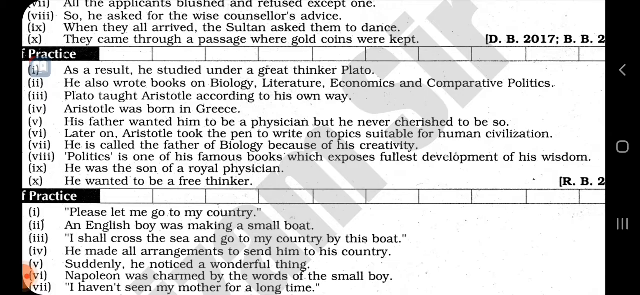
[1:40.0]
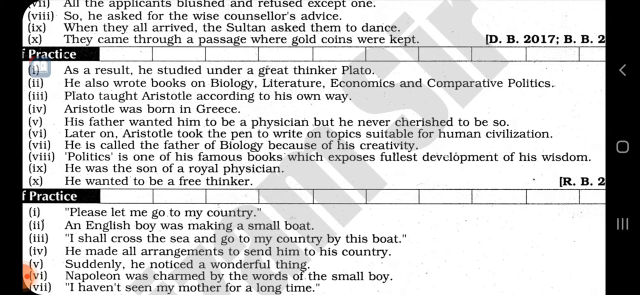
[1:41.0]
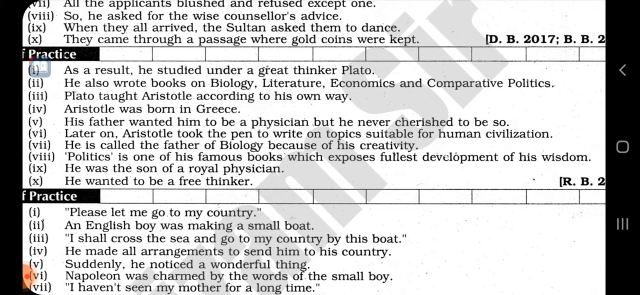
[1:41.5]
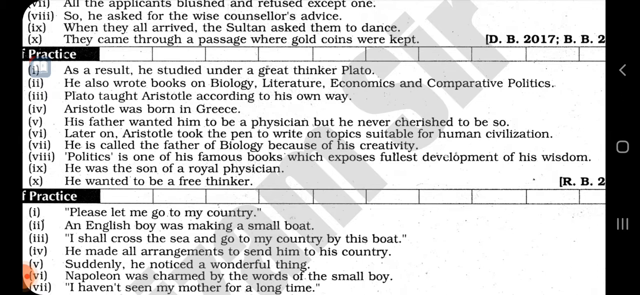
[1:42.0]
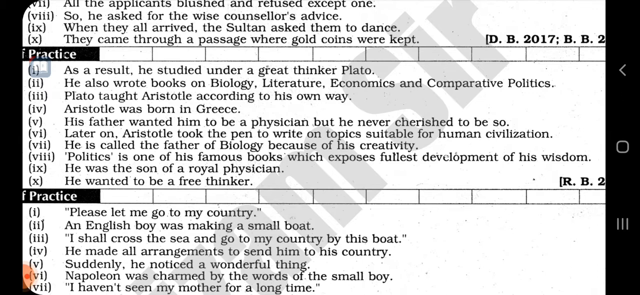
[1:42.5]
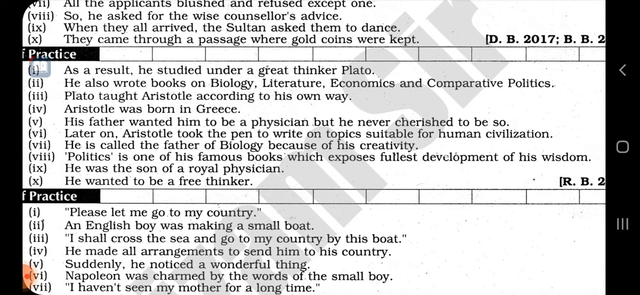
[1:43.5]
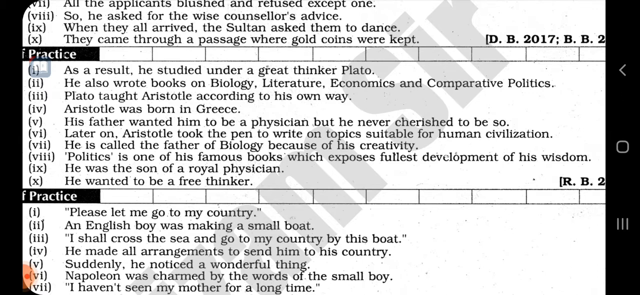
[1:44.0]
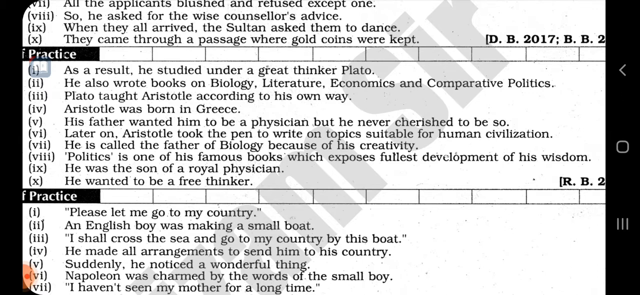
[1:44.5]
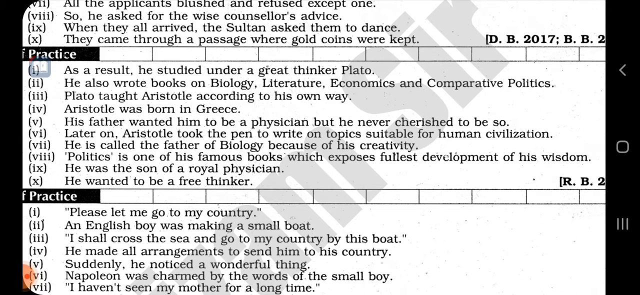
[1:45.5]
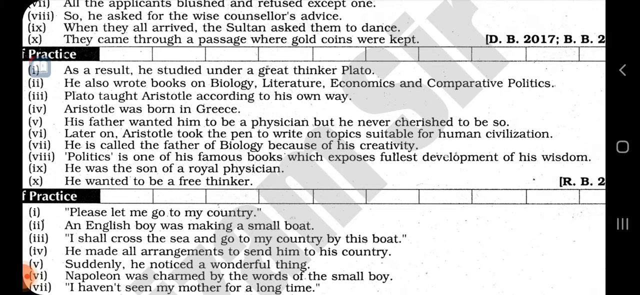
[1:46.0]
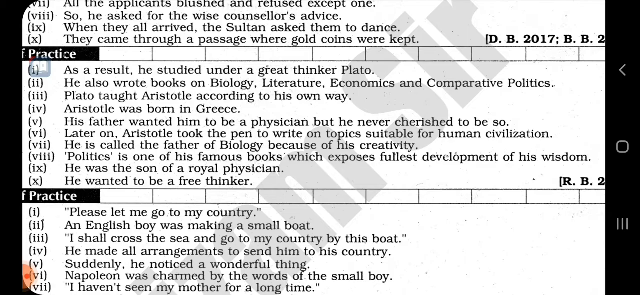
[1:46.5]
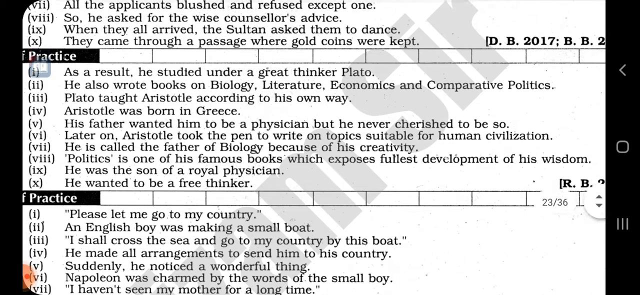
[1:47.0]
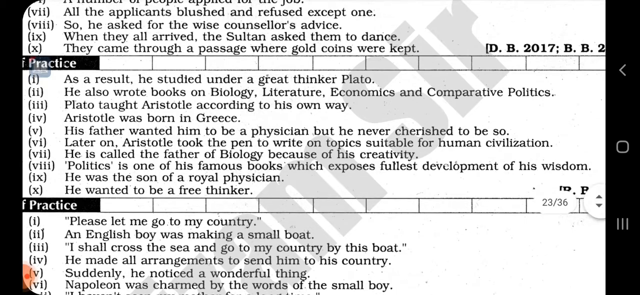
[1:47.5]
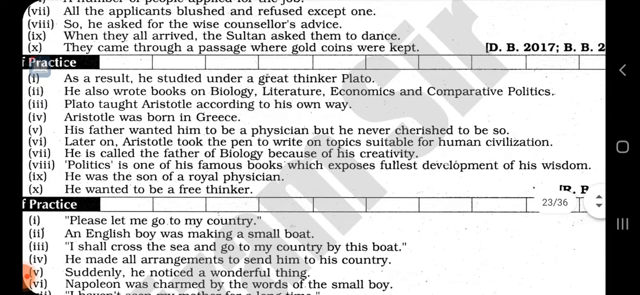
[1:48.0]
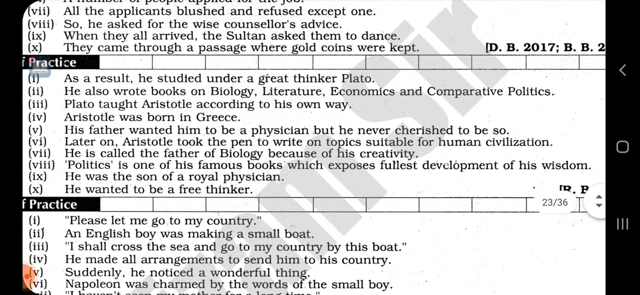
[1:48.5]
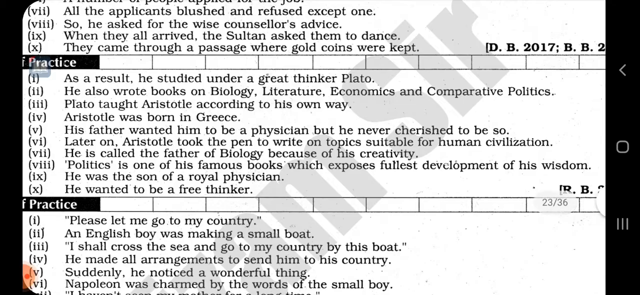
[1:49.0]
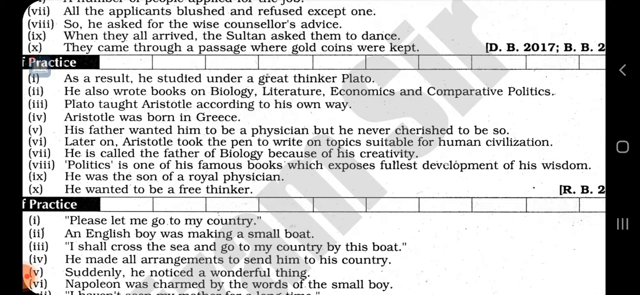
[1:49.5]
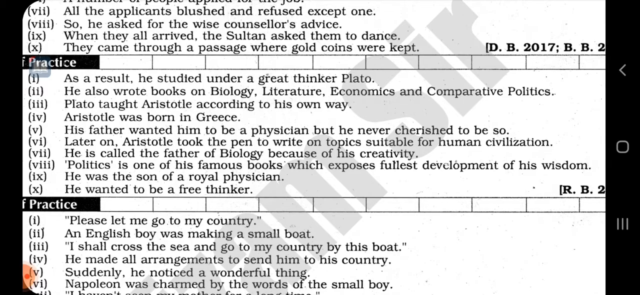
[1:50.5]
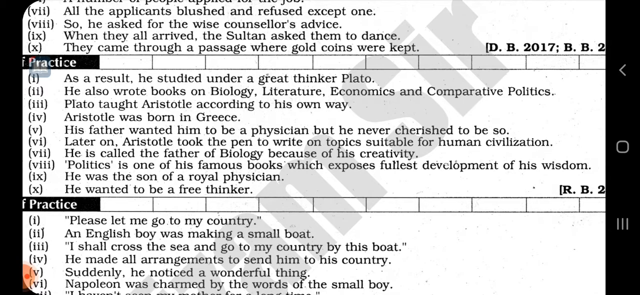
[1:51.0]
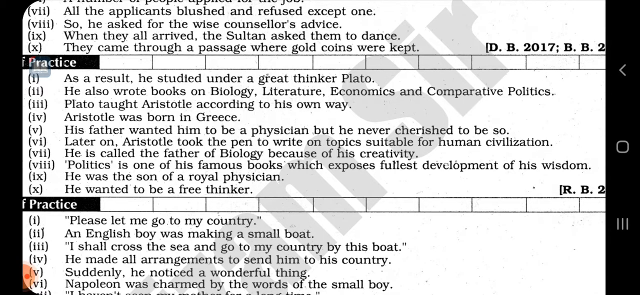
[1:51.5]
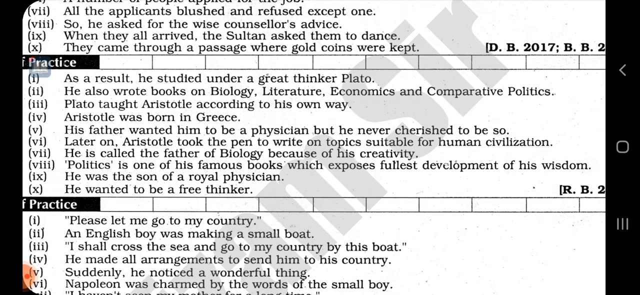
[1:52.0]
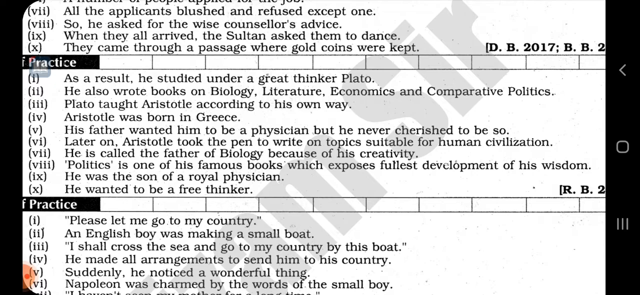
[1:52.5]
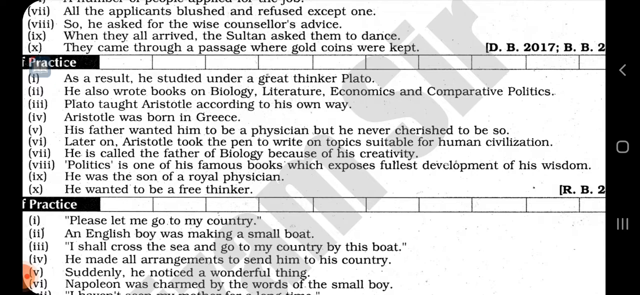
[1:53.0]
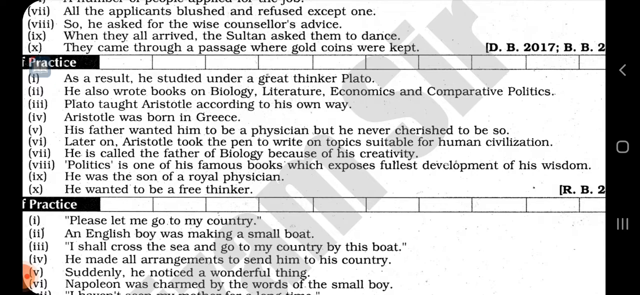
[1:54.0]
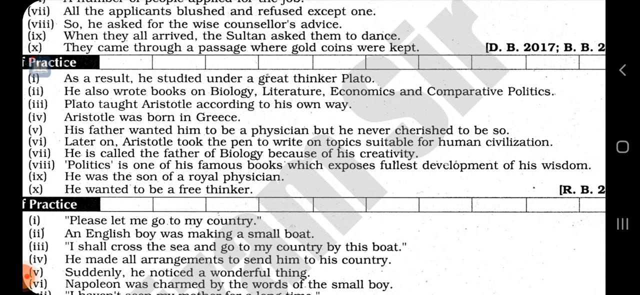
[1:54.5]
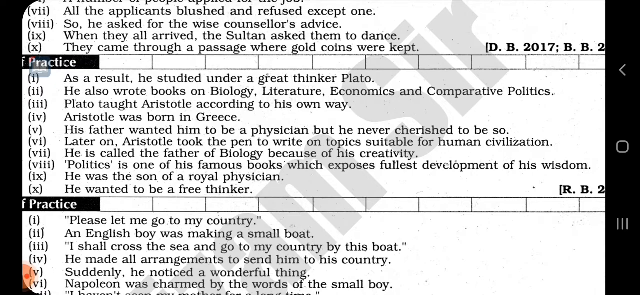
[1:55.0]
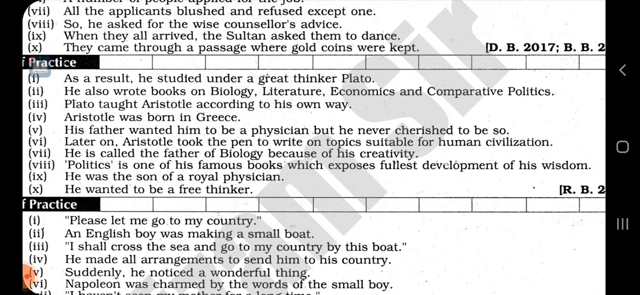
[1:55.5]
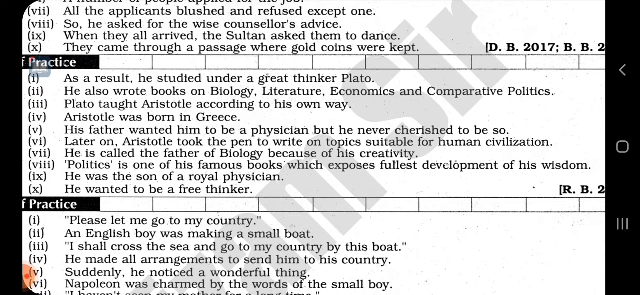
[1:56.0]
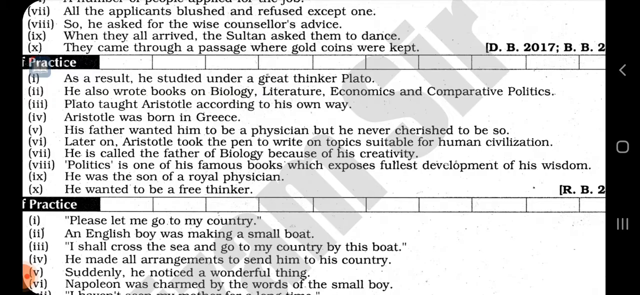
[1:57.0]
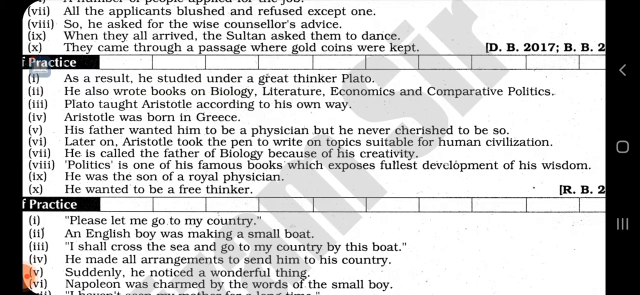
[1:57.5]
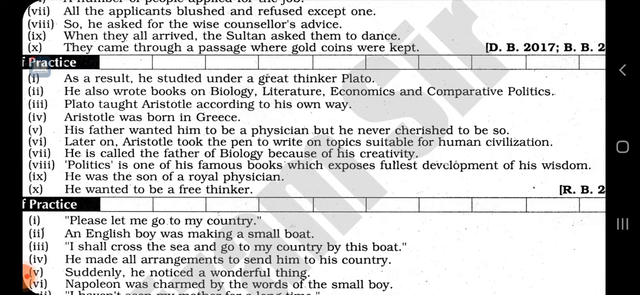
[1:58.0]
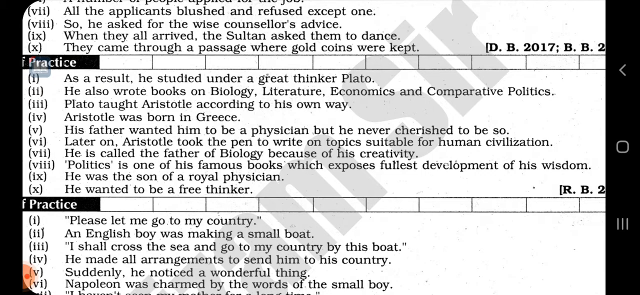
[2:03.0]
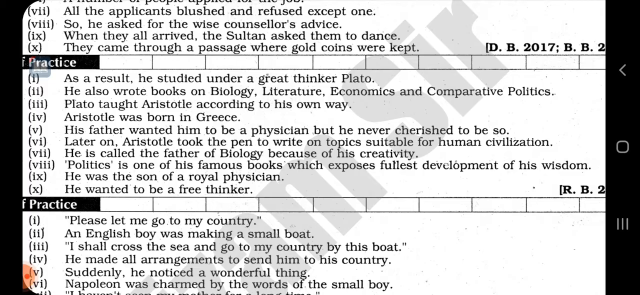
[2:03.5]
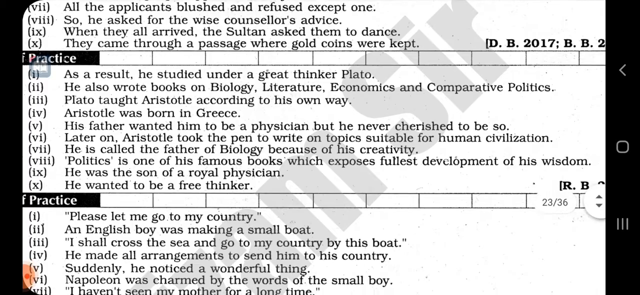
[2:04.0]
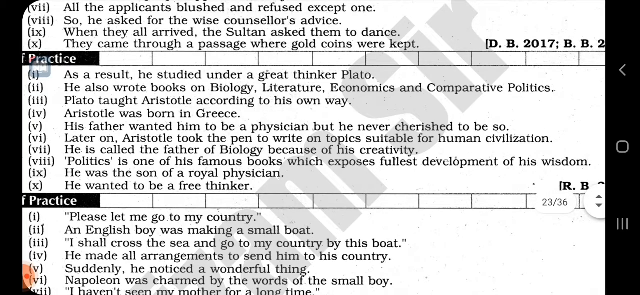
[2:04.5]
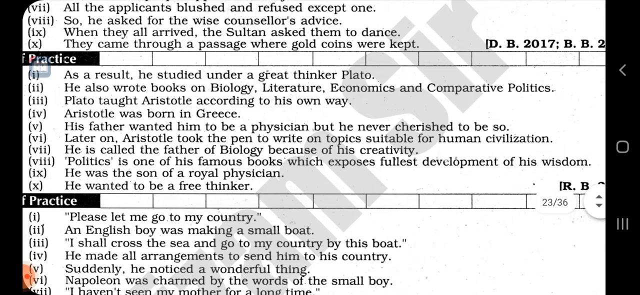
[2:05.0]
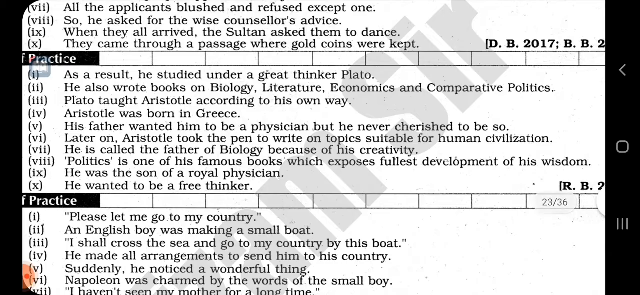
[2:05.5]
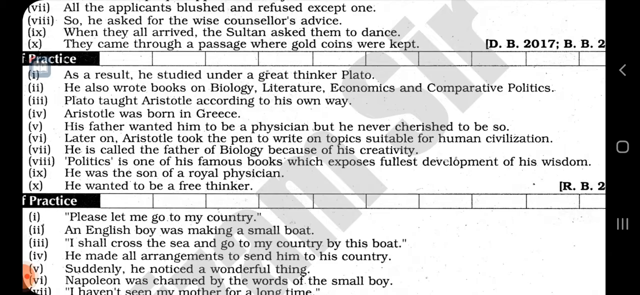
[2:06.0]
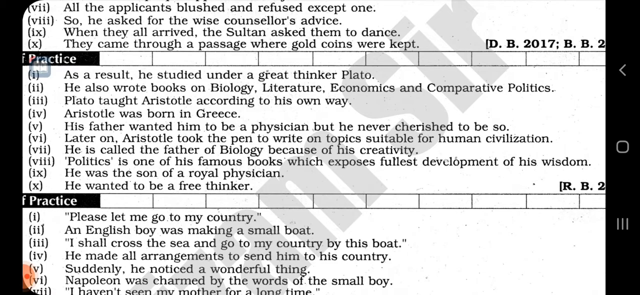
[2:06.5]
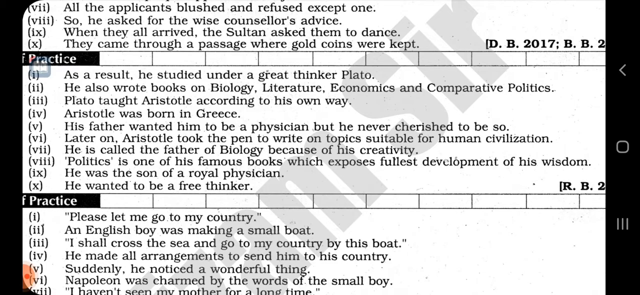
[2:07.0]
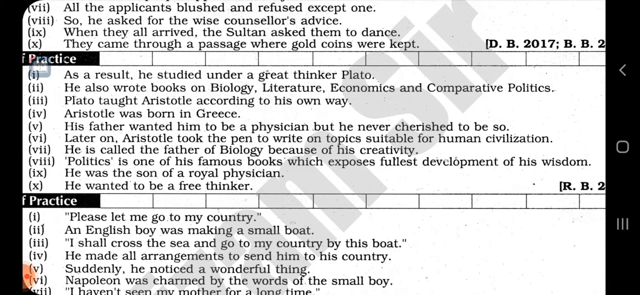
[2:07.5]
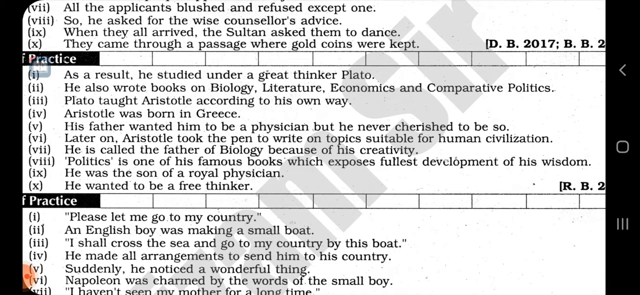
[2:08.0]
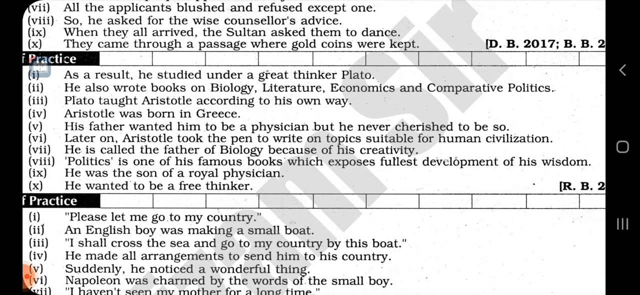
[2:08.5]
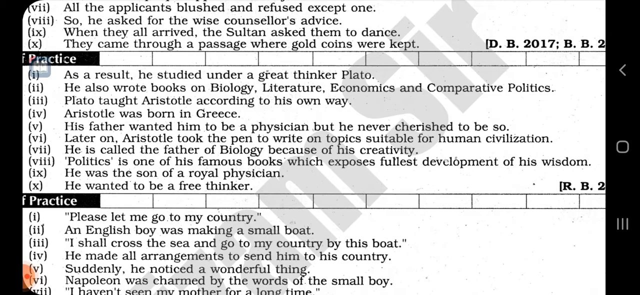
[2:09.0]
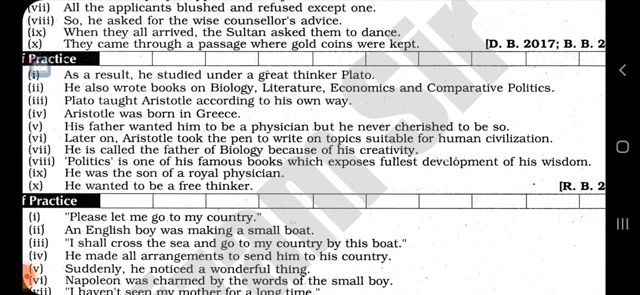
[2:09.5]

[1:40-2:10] The view appears focused on the middle passage, about Aristotle and Plato and Aristotle's history: where he was born, what his father did for work, and what his father wanted him to do versus what Aristotle wanted, which was to be a free thinker. The next question seems to be about Napoleon in a dialogue with a small English boy; option one reads, in quotes, "please let me go to my country," and option three reads, in quotes, "I shall cross the sea and go to my country by this boat." The top question involves gold. As the view is adjusted slightly, the scroll bar appears showing "23 out of 36," and the screen appears to be readjusted to emphasize the middle passage. A red dot inside a bigger red dot in the bottom left of the screen looks like some sort of recording indicator.